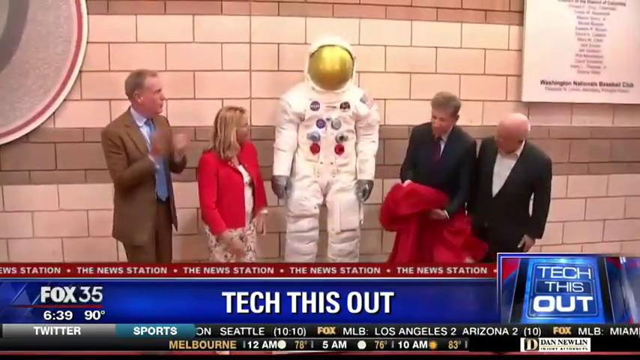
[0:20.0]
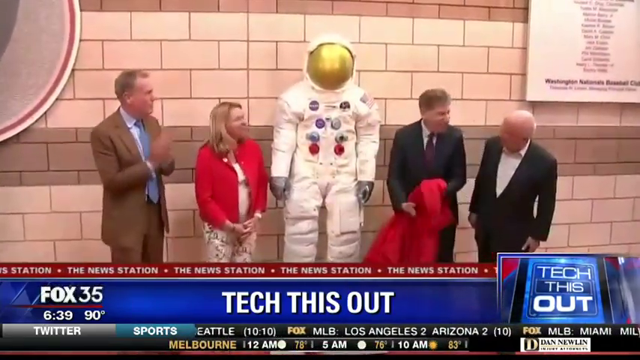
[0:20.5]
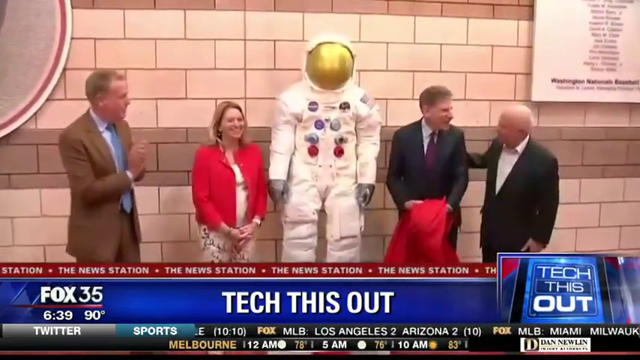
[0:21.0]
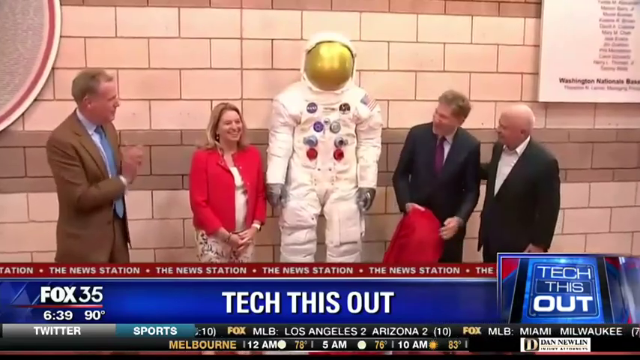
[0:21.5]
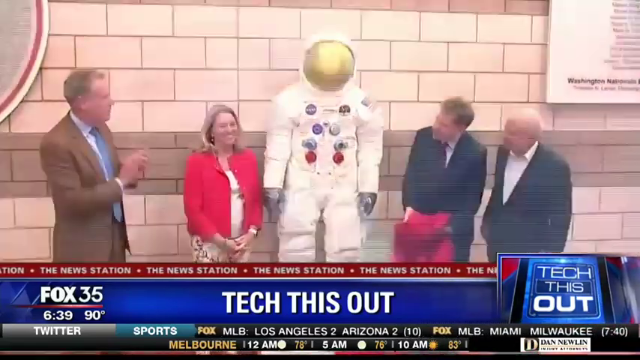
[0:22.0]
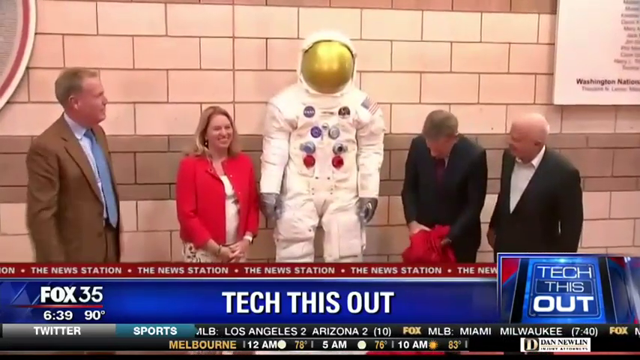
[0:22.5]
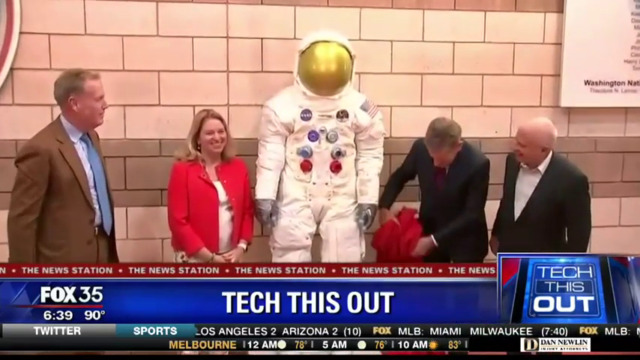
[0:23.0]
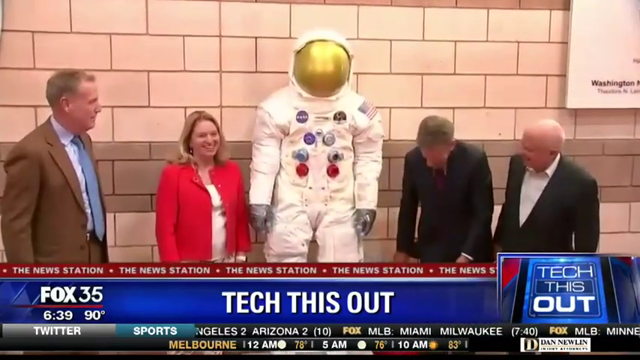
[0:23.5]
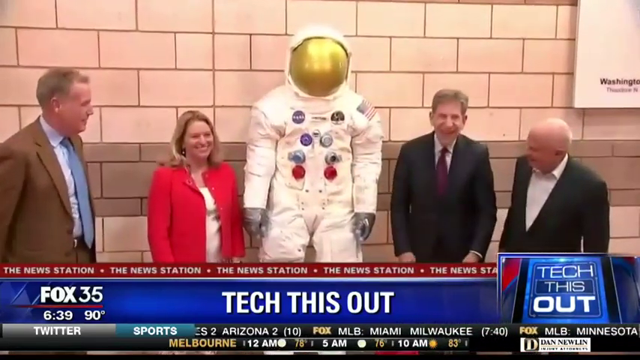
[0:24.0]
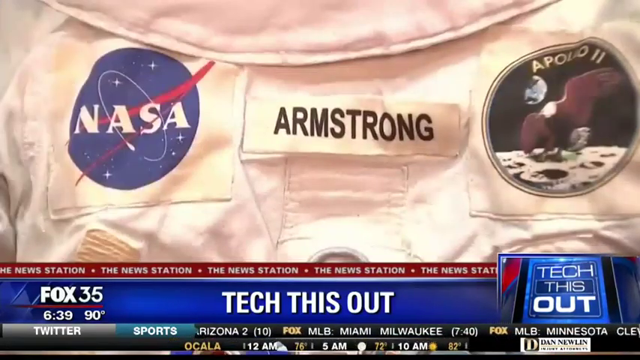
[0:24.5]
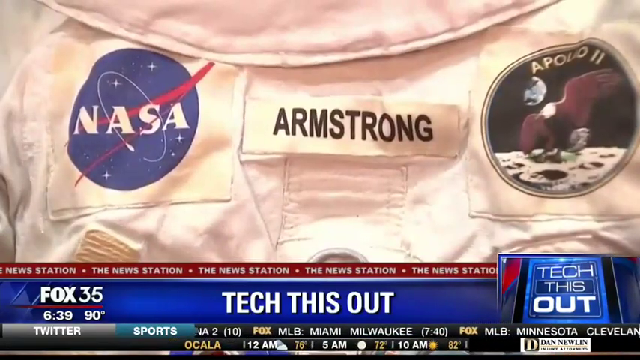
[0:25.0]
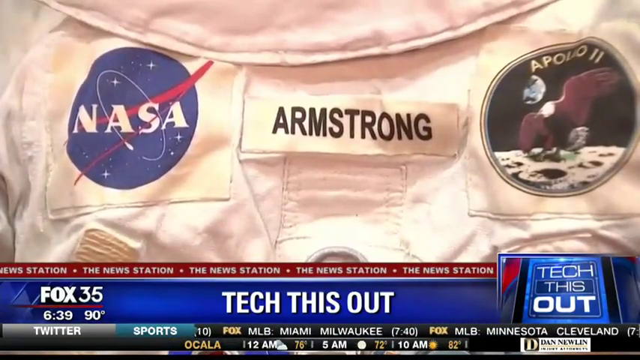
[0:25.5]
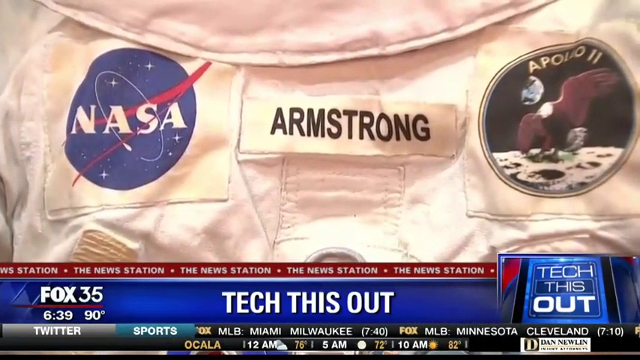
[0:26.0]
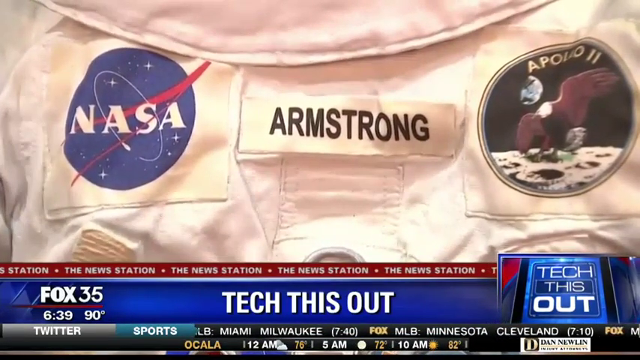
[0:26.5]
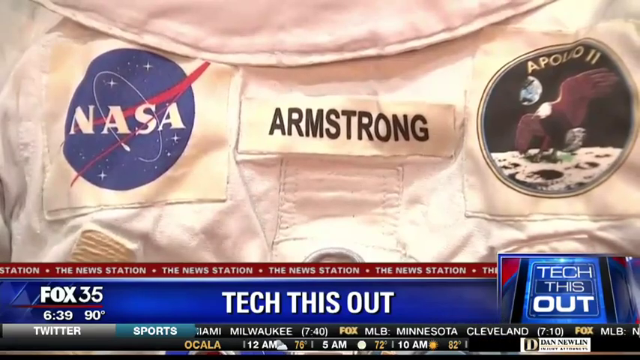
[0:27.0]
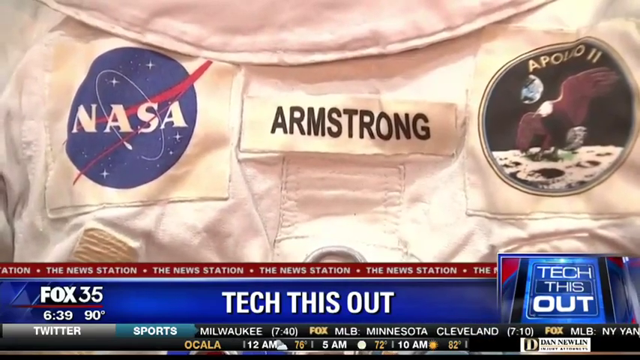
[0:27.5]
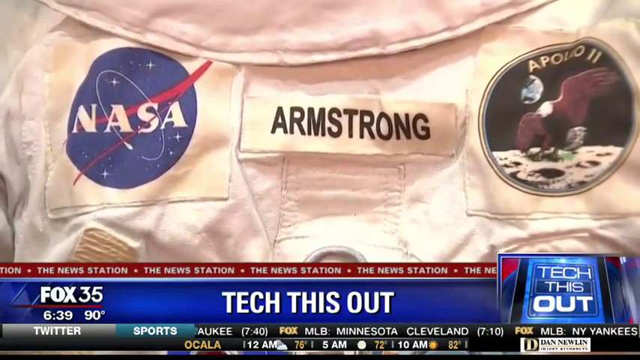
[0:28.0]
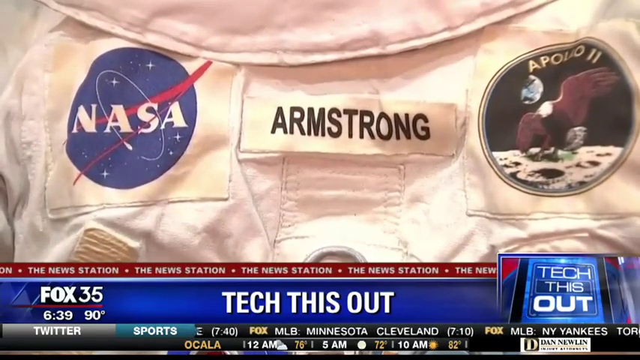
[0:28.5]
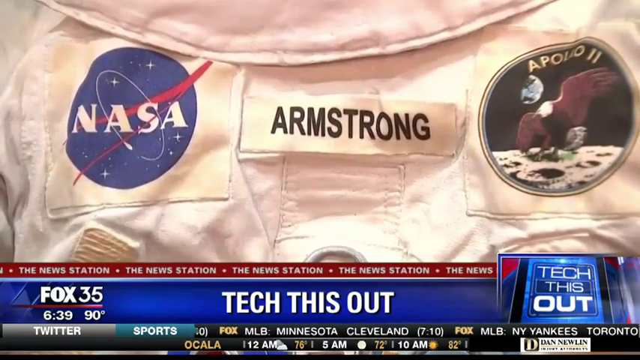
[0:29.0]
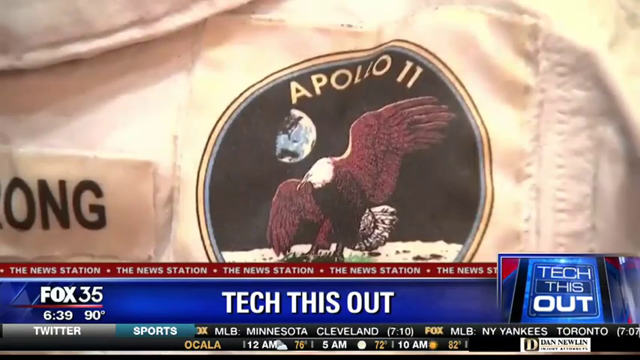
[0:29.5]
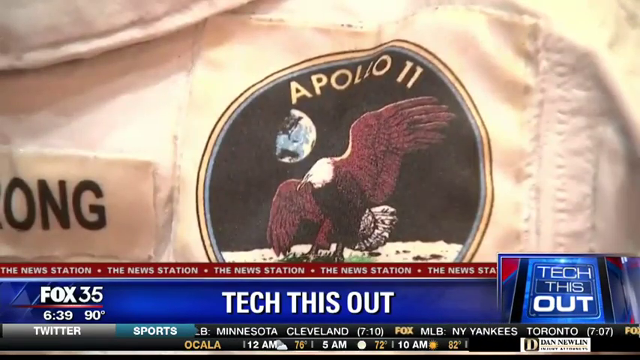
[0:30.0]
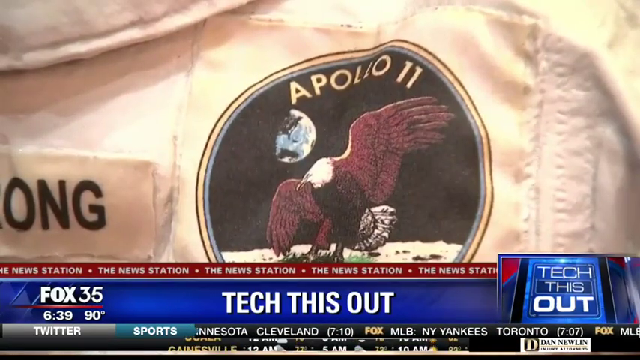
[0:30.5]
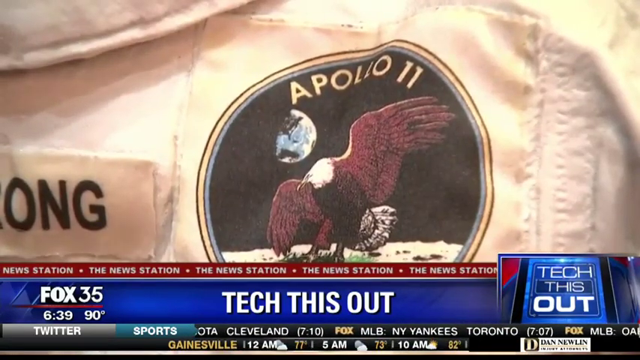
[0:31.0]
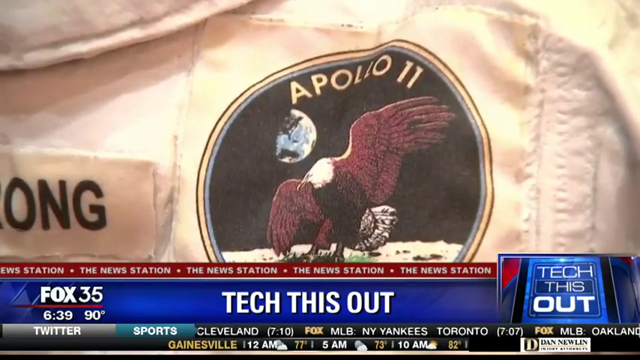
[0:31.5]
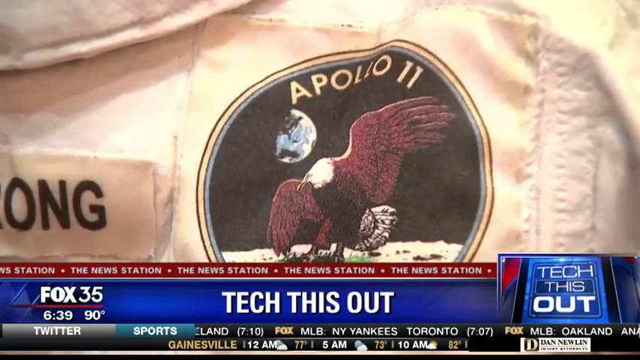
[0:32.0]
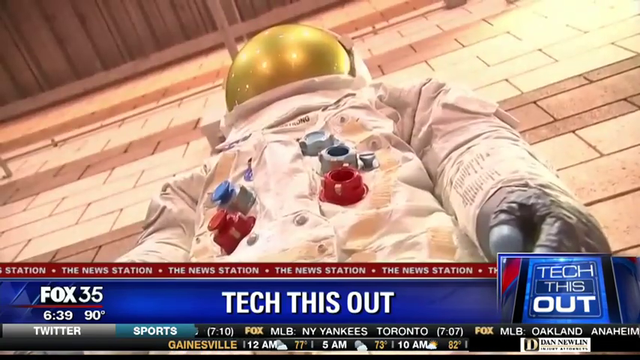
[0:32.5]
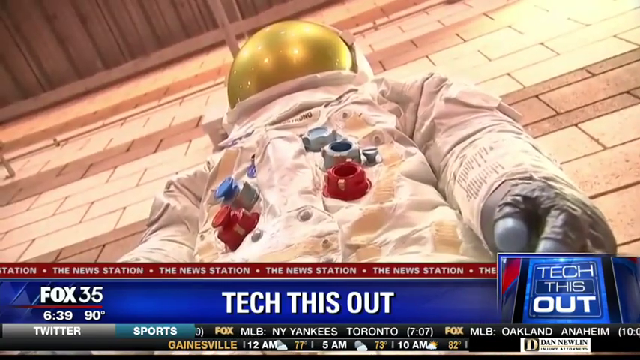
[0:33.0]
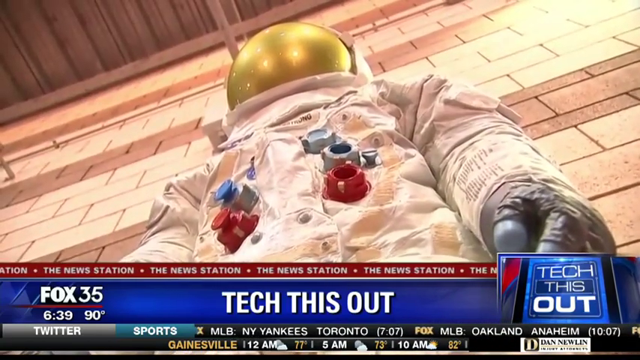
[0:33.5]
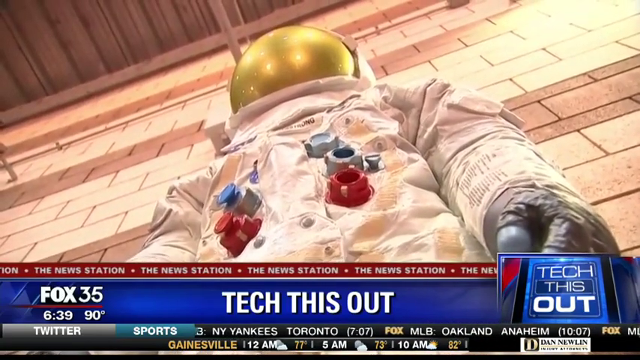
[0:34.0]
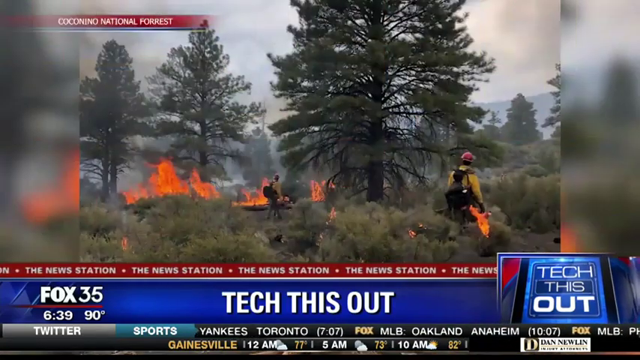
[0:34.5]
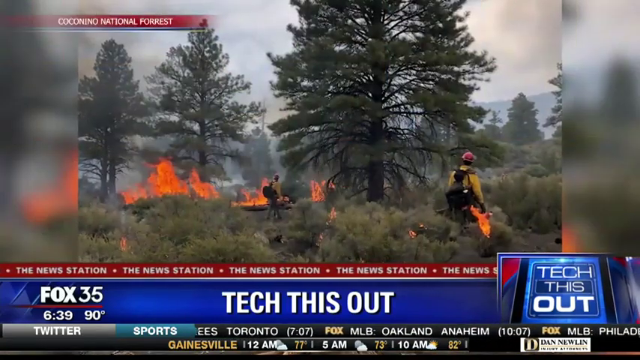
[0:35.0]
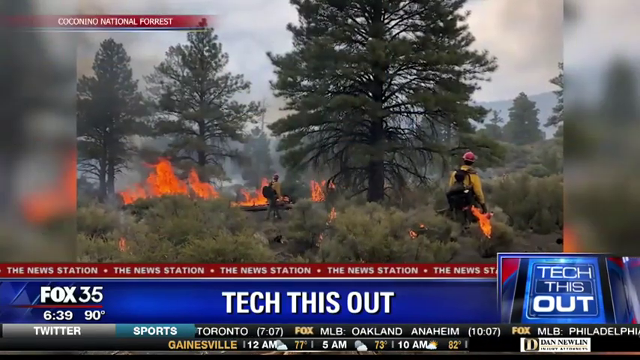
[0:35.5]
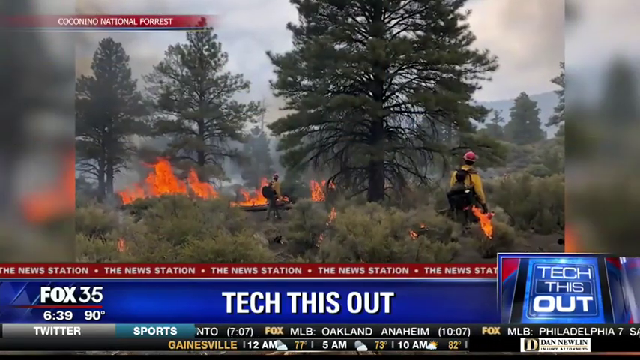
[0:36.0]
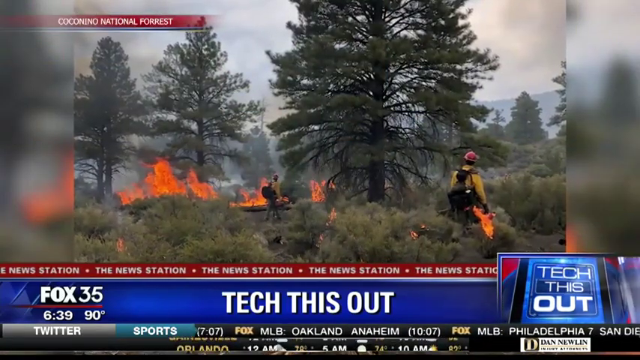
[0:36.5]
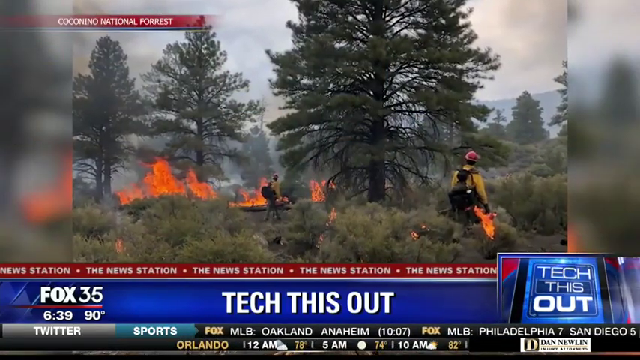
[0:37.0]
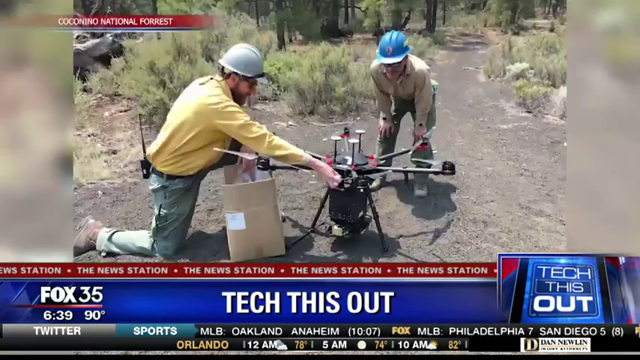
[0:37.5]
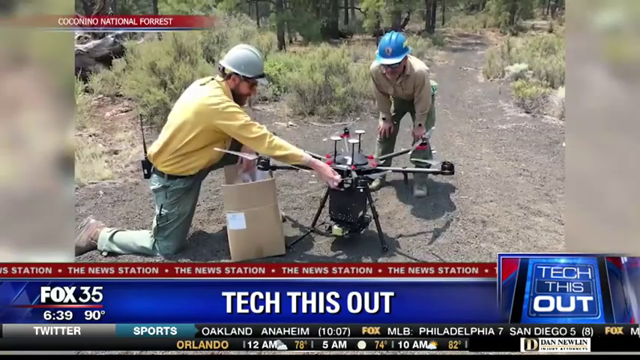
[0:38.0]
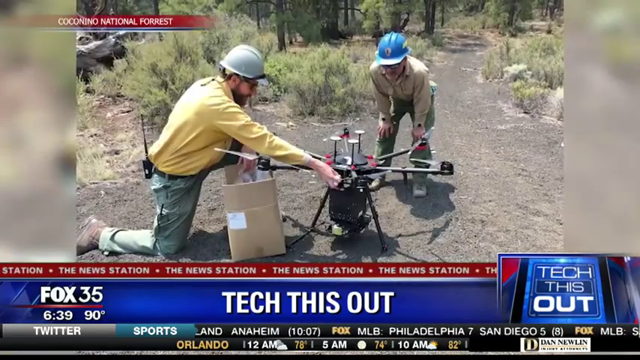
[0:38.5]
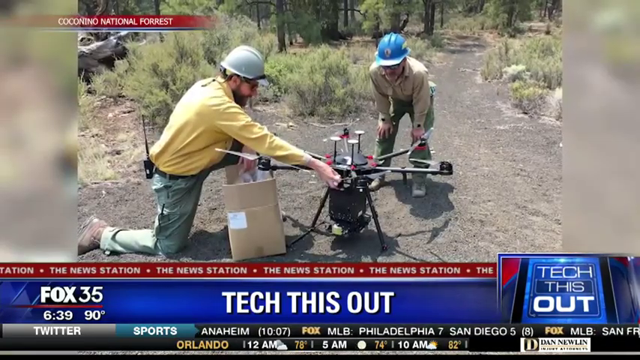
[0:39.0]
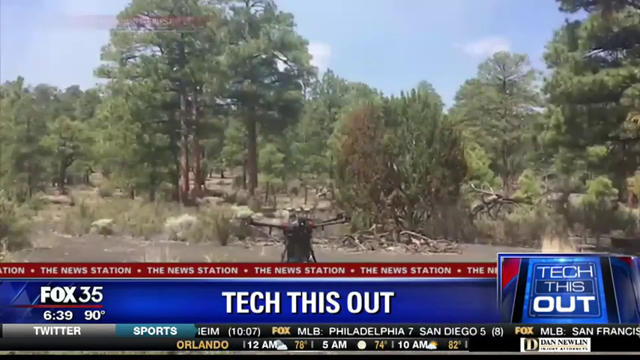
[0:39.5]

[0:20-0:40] The segment shows footage from an exhibition featuring the spacesuit worn by Neil Armstrong, the first man on the moon. The spacesuit is unveiled by four people, three men and a woman, apparently at a museum in Washington. The suit is predominantly white, with a tinted face shield on the helmet. Armstrong's name tag is clearly visible alongside the NASA logo and the Eagle badge of Apollo 11, and there are close-ups of those badges. Next comes an item about wildfires: firefighters battle ground-level blazes that endanger local woodlands, followed by footage of the increased use of drones to detect and fight fires. Baseball listings return: Minnesota–Cleveland begins at 7.10, the New York Yankees versus Toronto starts at 7.07, Oakland versus Anaheim starts at 10.07 this evening, and in the 8th inning Philadelphia are beating San Diego 7 runs to 5.